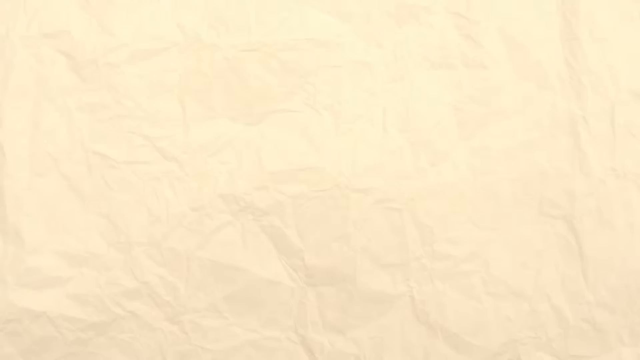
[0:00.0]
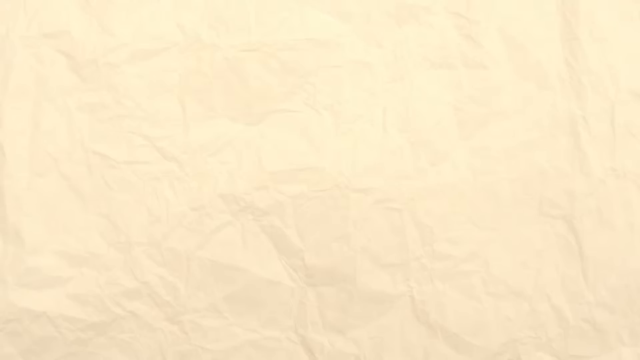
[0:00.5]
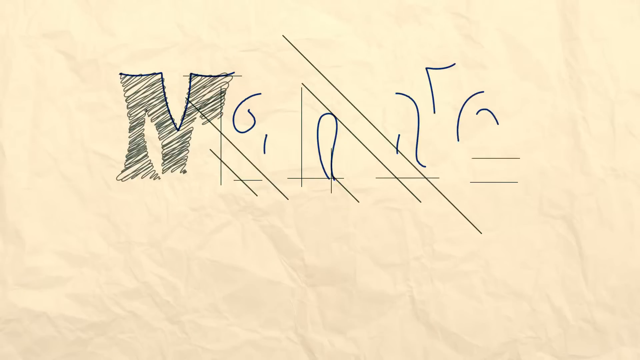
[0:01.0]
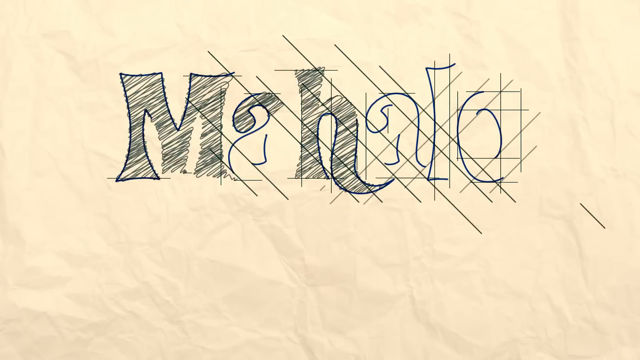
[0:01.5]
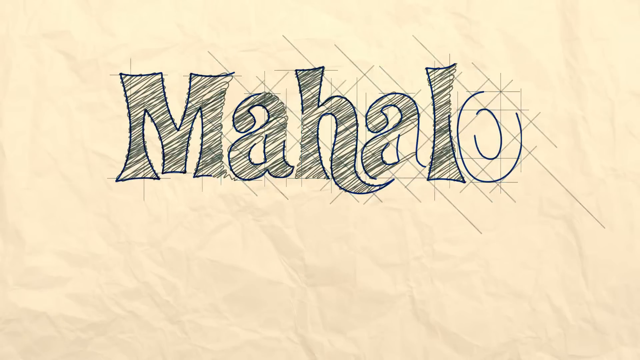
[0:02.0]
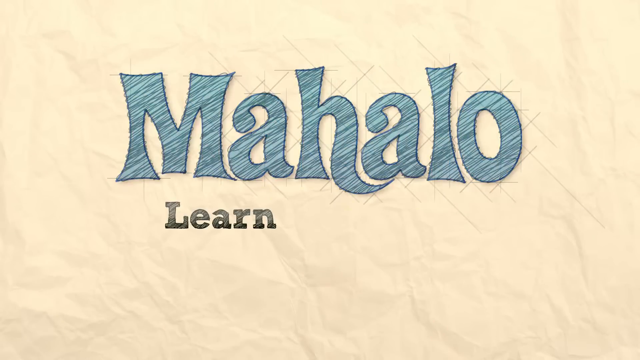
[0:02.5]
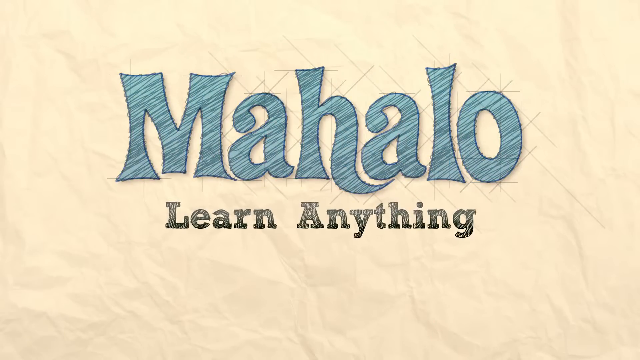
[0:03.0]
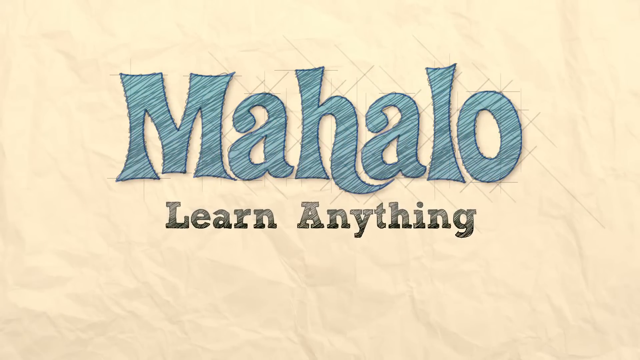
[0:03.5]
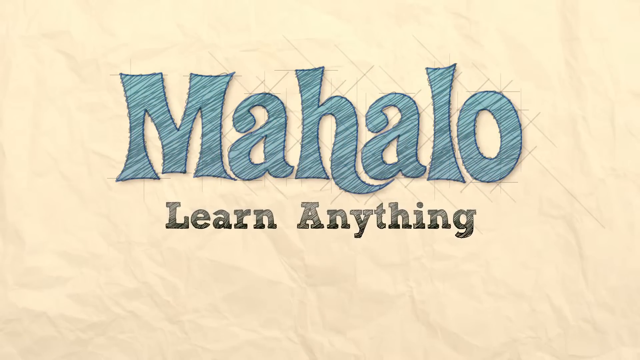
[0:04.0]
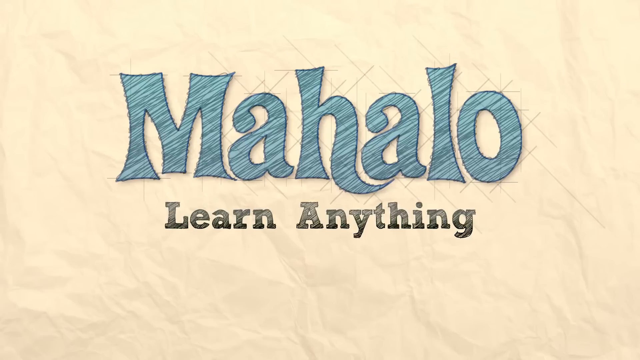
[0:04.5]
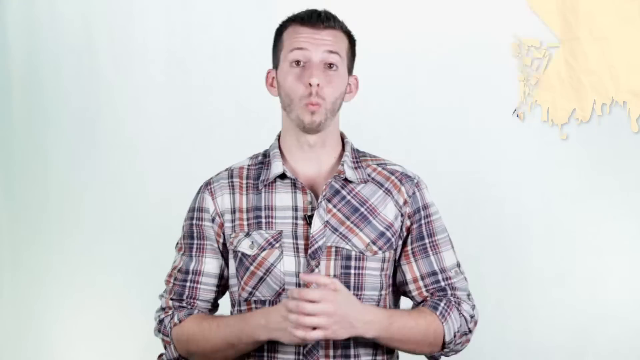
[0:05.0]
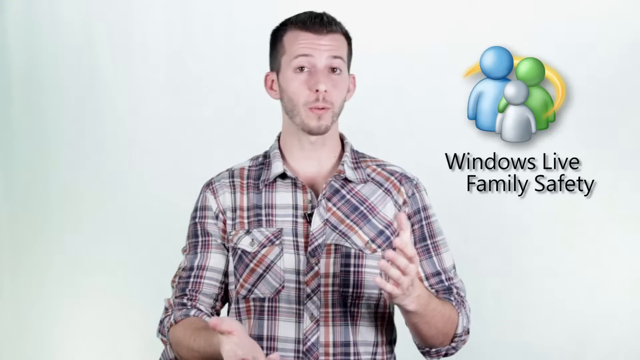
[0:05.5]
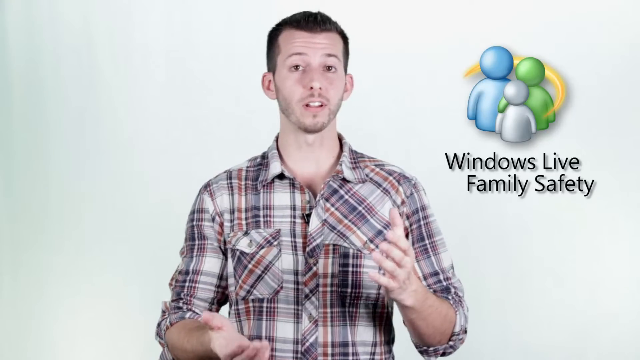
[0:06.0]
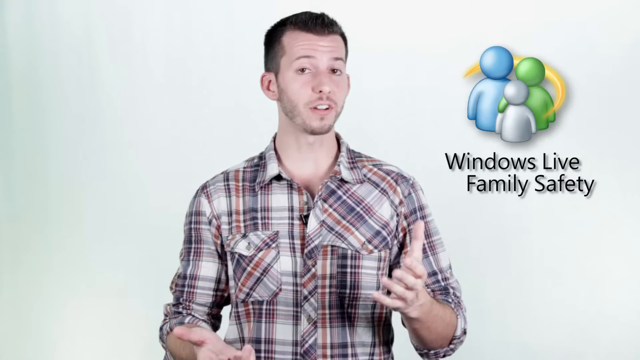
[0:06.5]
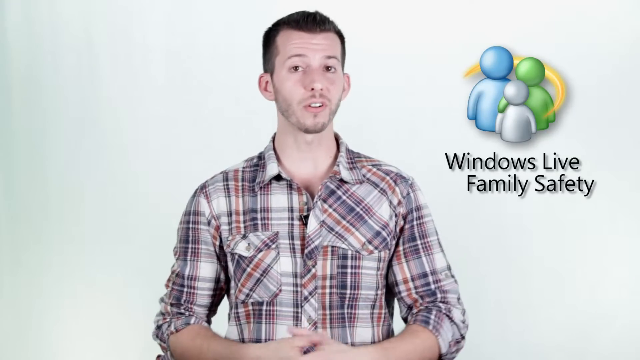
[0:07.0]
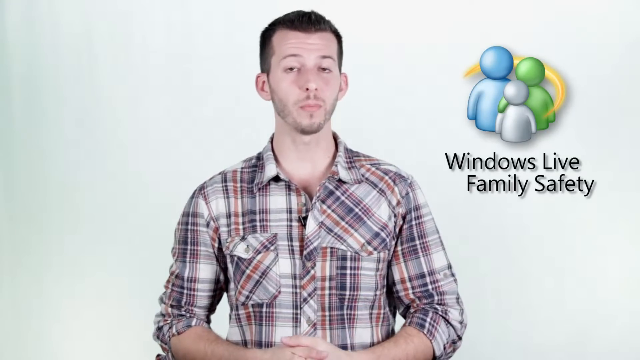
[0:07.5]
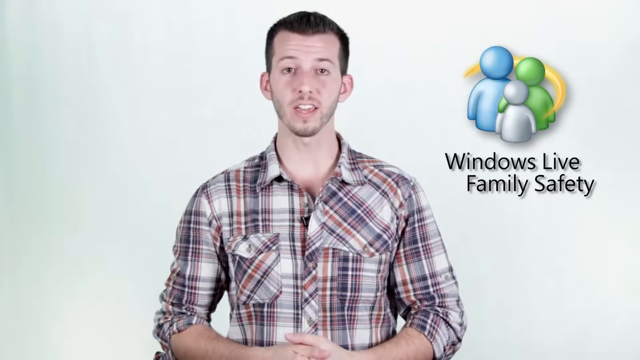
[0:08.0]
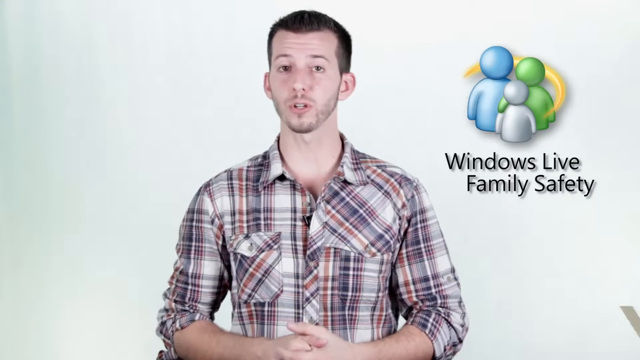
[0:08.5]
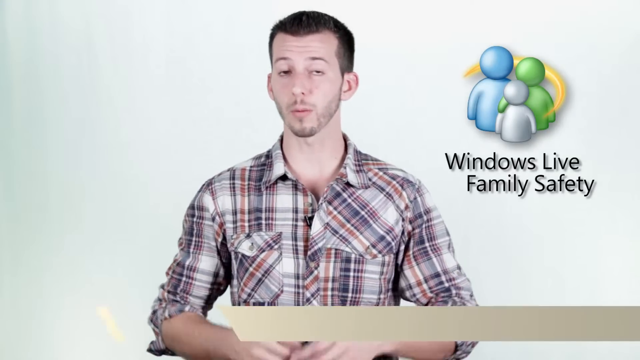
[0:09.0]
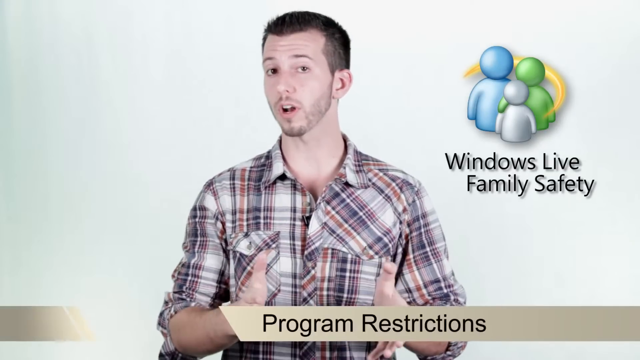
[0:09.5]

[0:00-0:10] Against a vanilla background, marker- or pencil-like drawings appear, followed by computer-made, well-made text reading "Mahalo, learn anything." "Mahalo" shifts from black to a sort of dark blue shade with many diagonal edge lines running from top right to bottom left, while "learn anything" is black with more of a black edge line. The video then switches to a Caucasian man in a flannel shirt speaking to the viewer. He uses his hands to help communicate, raising them with his palms turned sort of inward toward his body. To his right is a family logo of generic polygon people, and below it reads "Windows Live Family Safety." As he talks, a small bar appears below, identifying him as Sean and indicating he will talk about program restrictions.